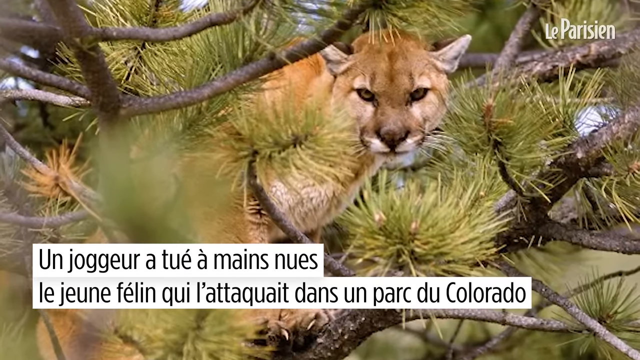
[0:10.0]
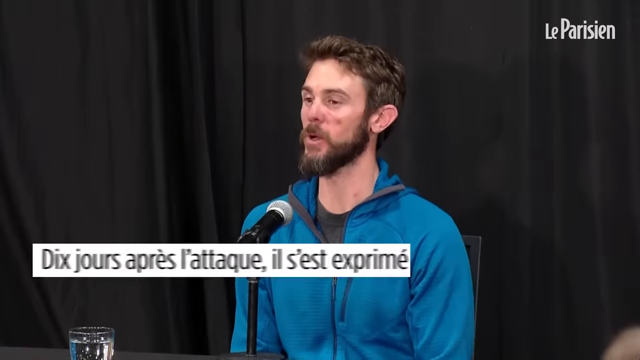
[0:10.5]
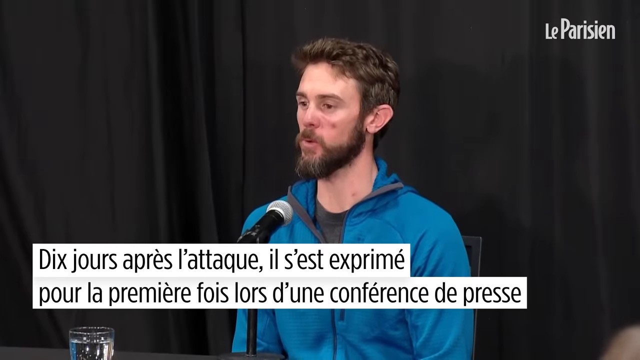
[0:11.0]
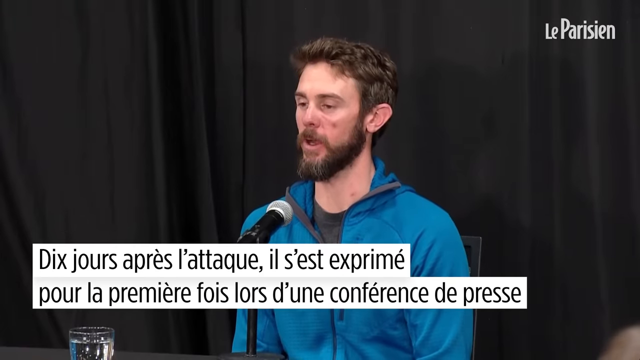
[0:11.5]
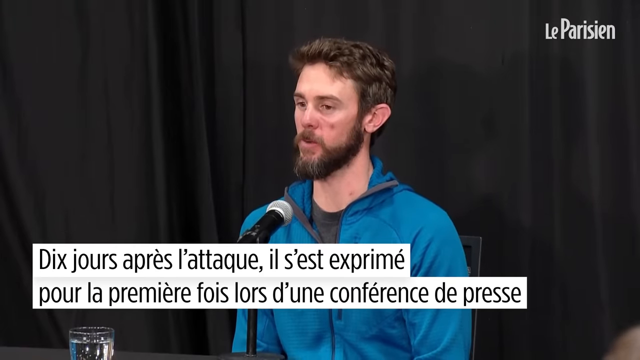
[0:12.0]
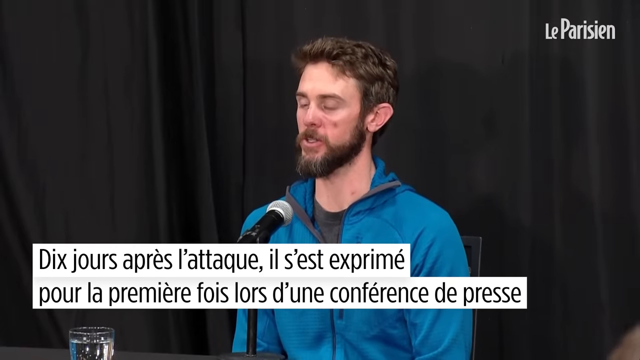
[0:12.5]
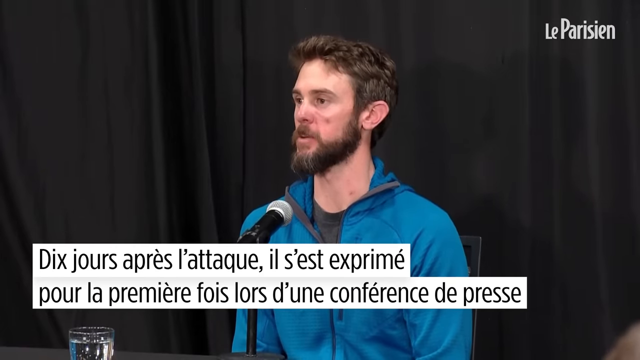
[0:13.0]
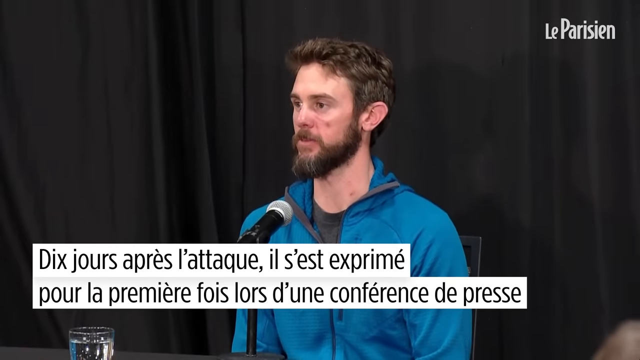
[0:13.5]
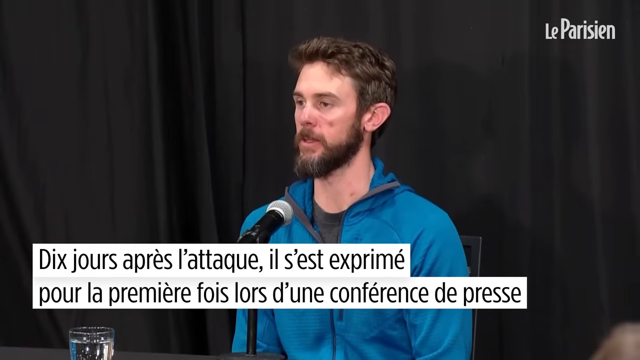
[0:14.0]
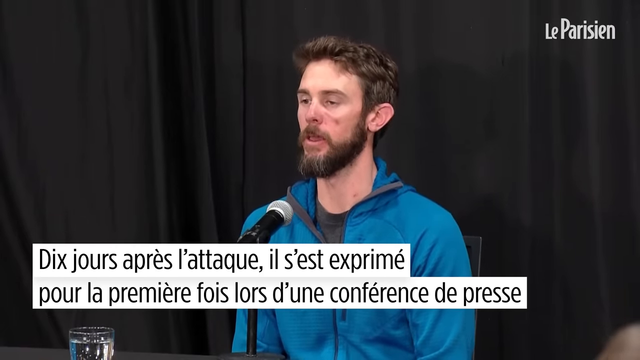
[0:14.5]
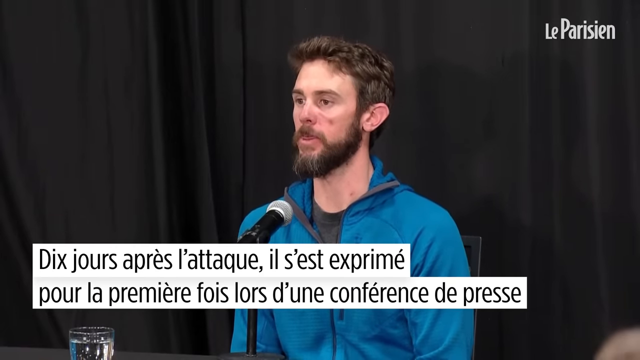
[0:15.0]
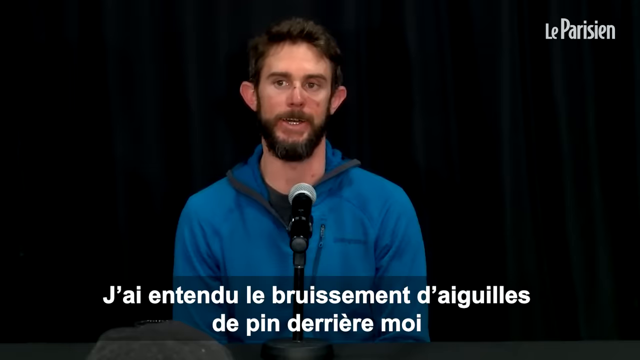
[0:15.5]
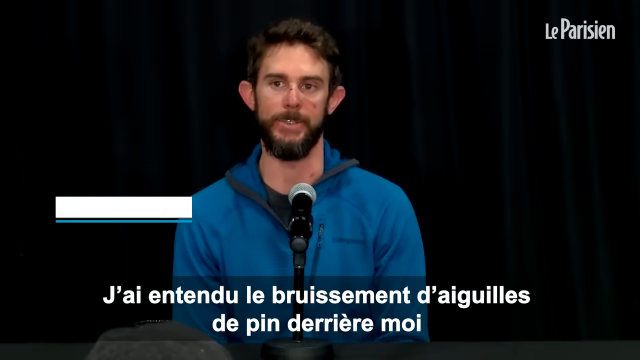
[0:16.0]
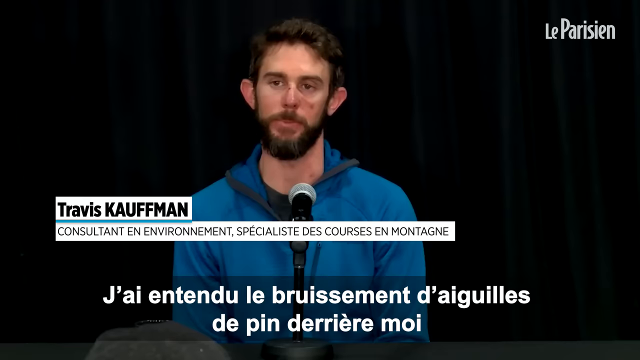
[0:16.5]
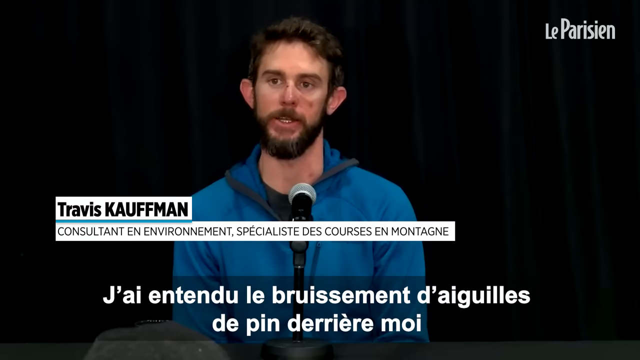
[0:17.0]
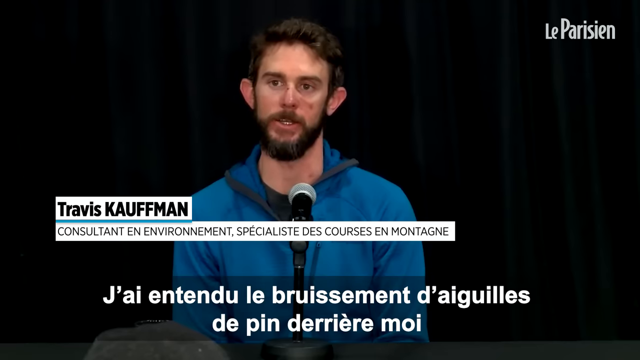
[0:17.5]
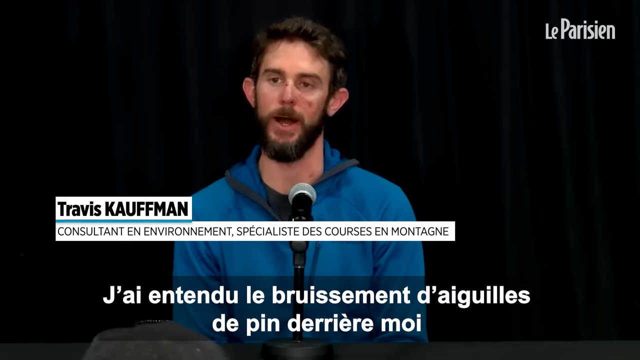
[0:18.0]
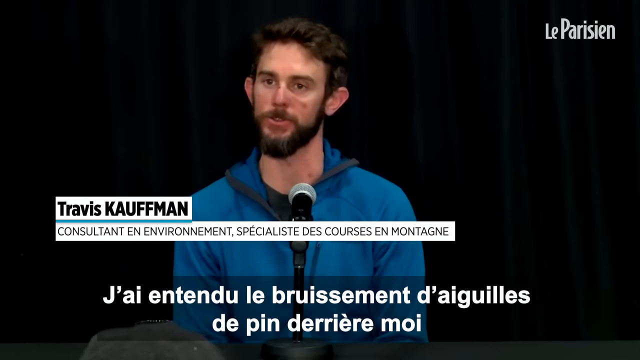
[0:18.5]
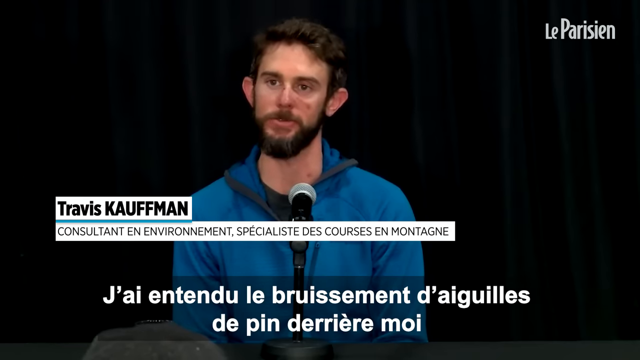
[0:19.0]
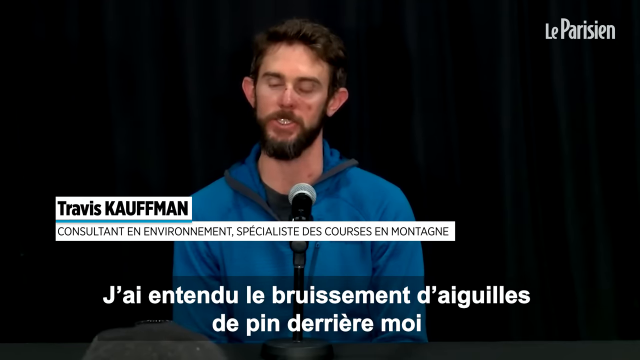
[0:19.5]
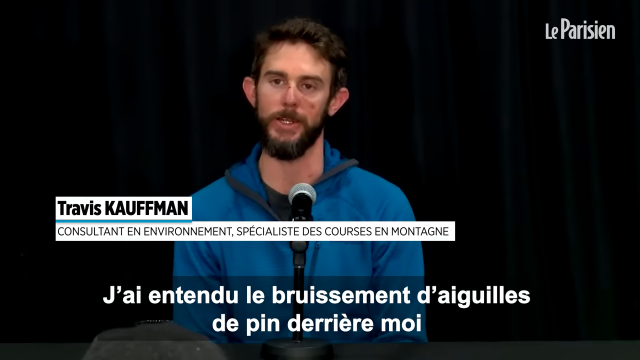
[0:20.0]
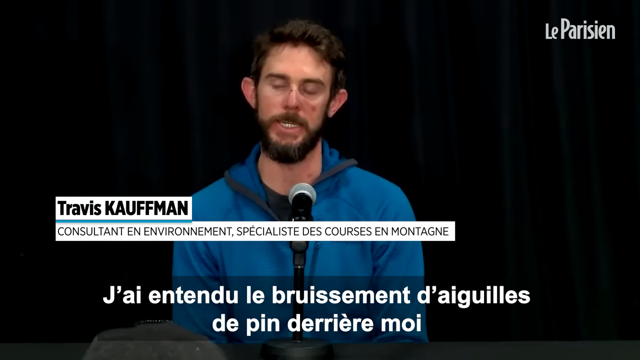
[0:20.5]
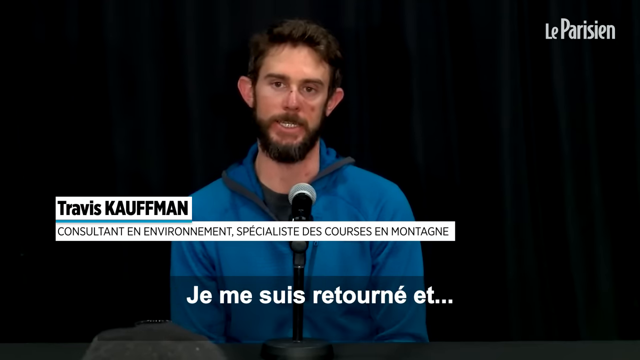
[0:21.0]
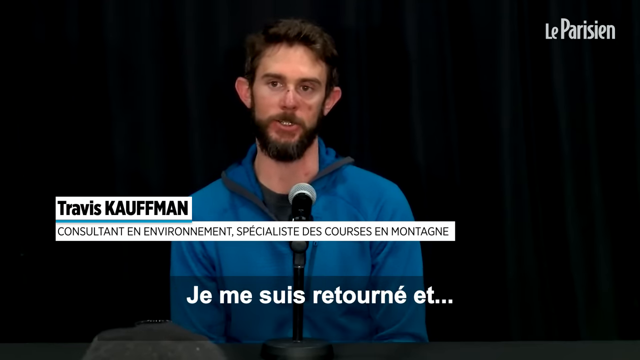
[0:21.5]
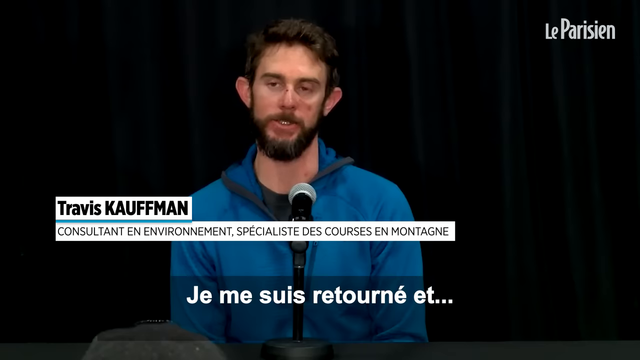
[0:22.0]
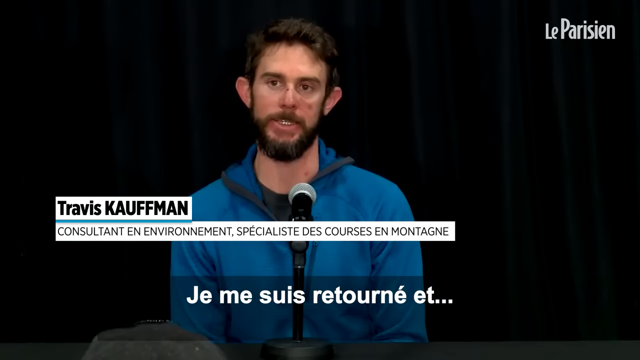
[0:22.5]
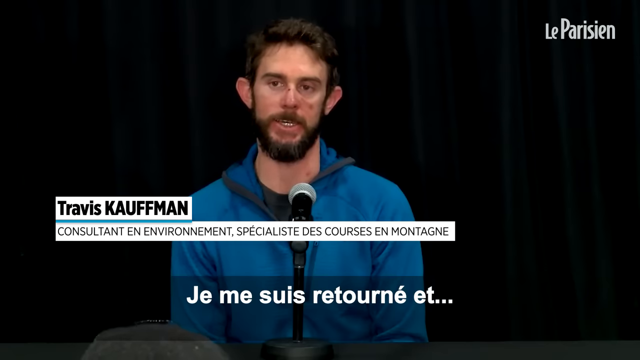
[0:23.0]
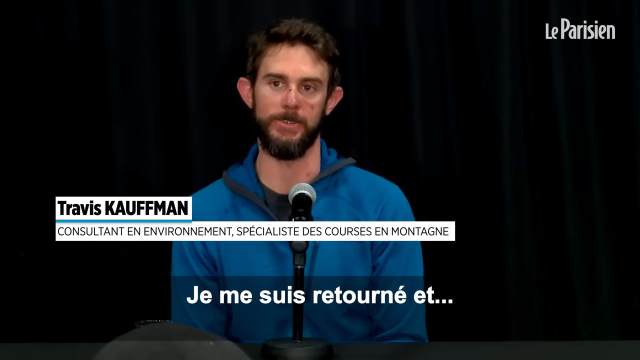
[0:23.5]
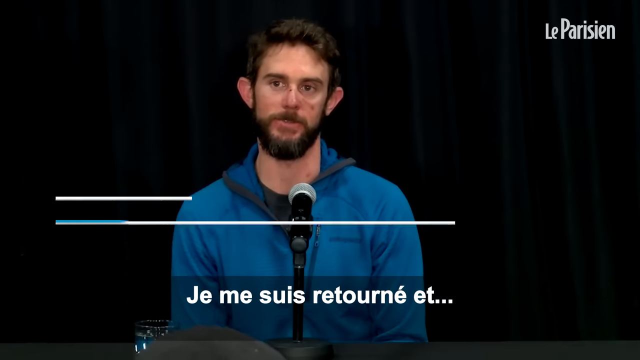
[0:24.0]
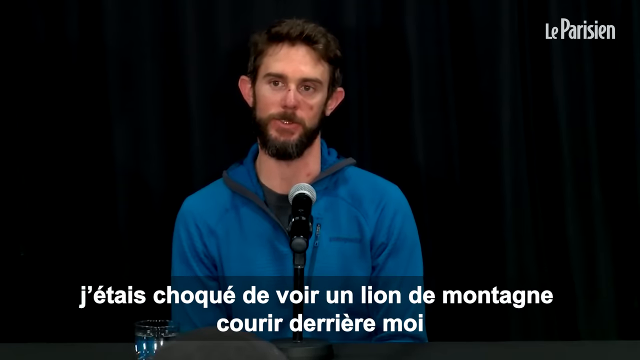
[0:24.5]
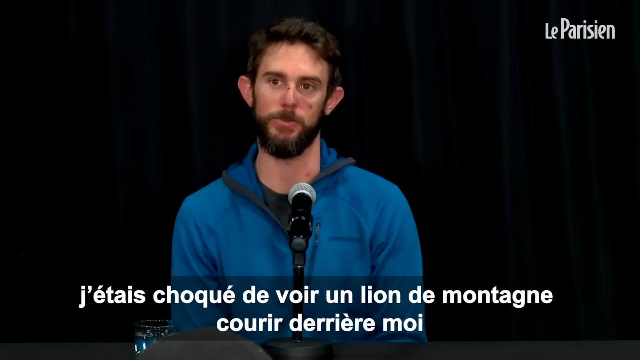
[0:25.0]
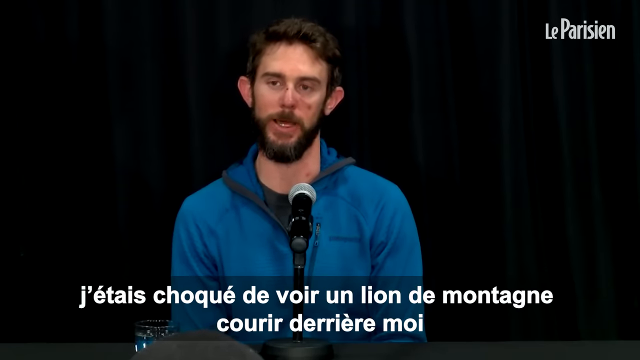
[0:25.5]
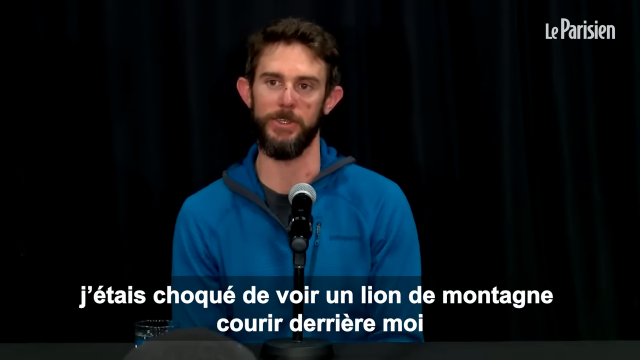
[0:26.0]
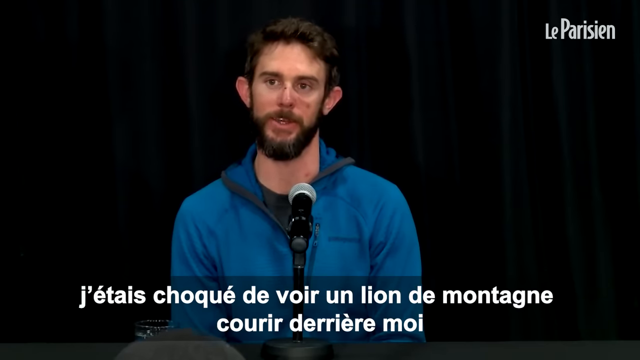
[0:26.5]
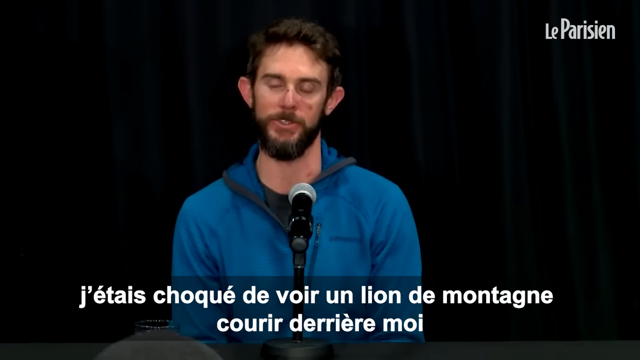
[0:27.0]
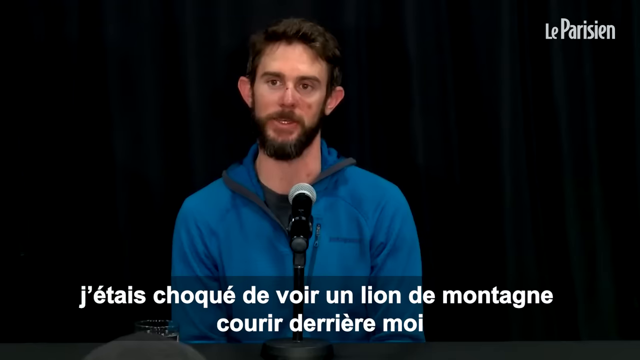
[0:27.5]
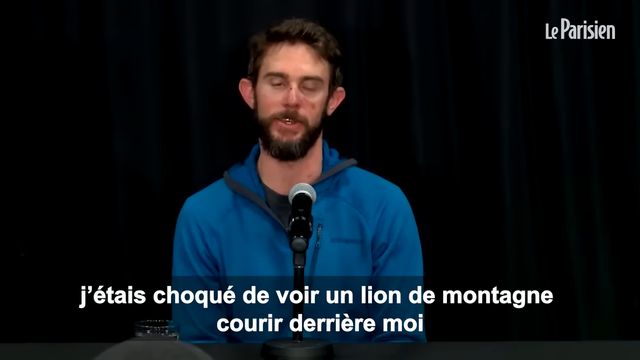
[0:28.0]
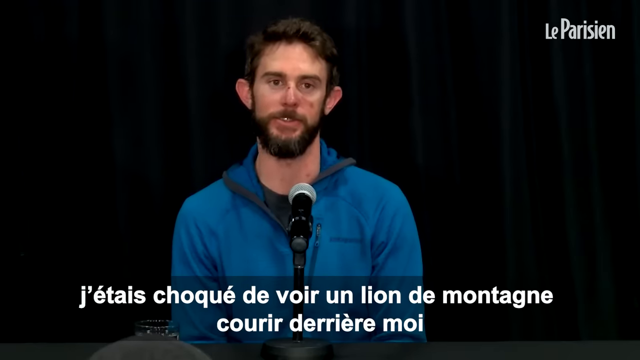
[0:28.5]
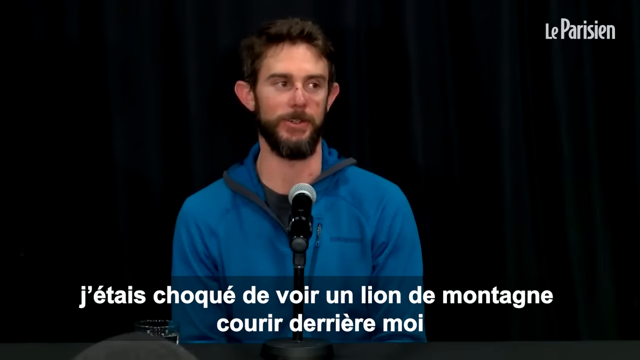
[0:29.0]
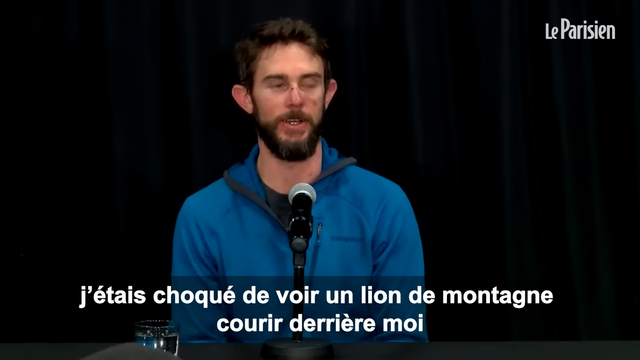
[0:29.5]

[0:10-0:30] An orange and white mountain lion looks at the camera, standing in a couple of branches that have little pines and clusters on them. The scene changes to a man talking into a microphone. He wears a blue jacket with a black shirt underneath and has short brownish-blackish hair, a beard and a mustache. A black curtain is behind him, and a logo at the top right says "La Parisienne." Text that is not in English, black on a white background, is at the bottom of the screen. The man talks. The scene changes to a different angle of the man, a front view, and a banner appears reading "Travis Kaufman, consultant on environment" followed by more words in French. French subtitles in white text on a transparent black background appear at the bottom of the screen and change twice.